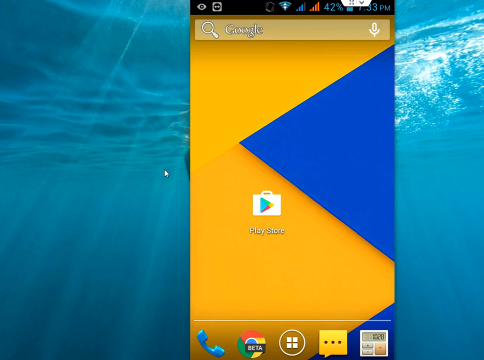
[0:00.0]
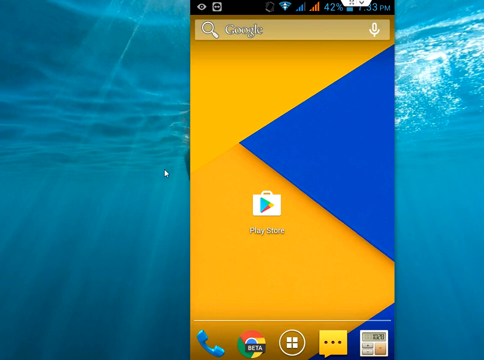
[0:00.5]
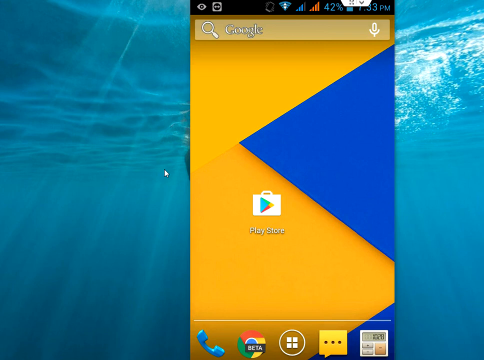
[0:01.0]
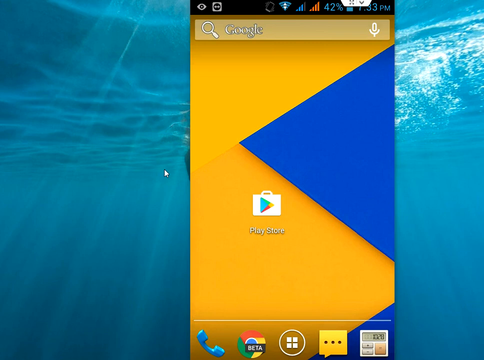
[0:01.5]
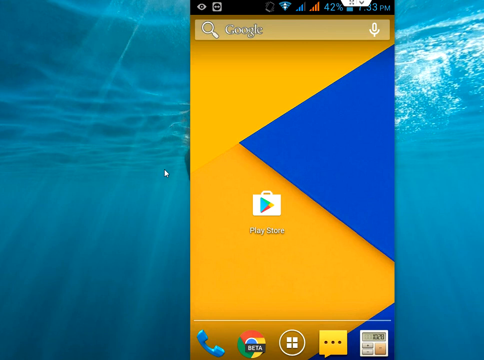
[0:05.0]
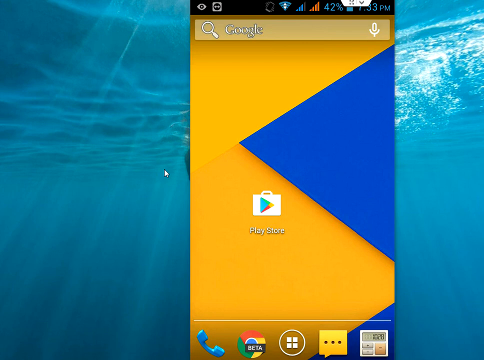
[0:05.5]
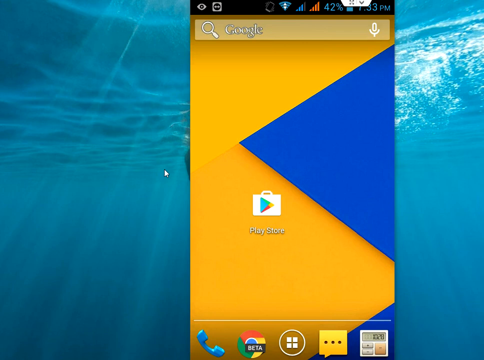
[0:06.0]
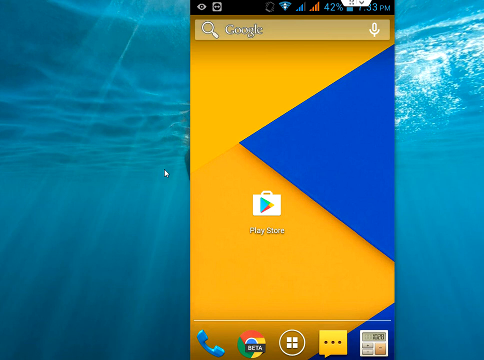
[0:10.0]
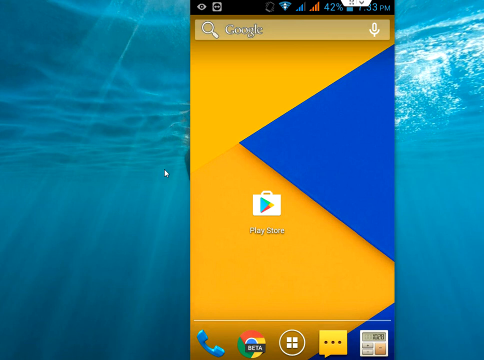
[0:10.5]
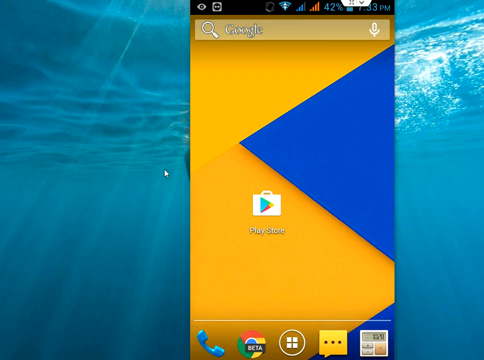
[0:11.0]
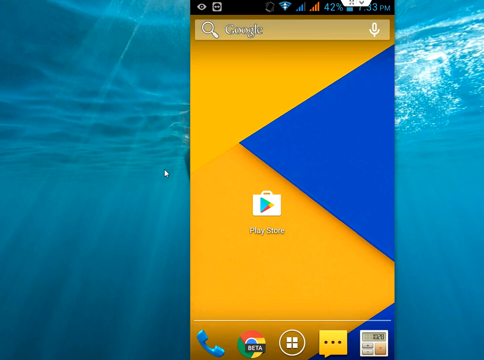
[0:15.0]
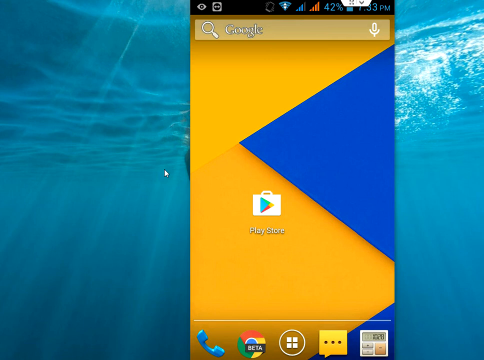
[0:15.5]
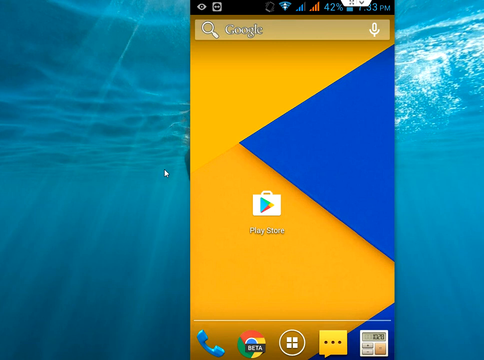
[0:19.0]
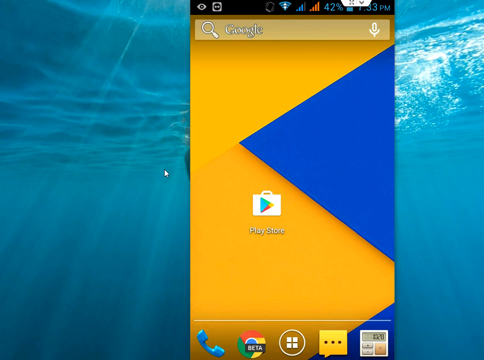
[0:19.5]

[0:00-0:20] The background appears to be underwater, either a pool or a swimming pool. Overlaid on it is a rectangular screen like that of an iPhone or smartphone. The screen has rectangular patterns along with yellow, blue and orange triangles. Almost at the center of the smartphone screen is a briefcase kind of icon, and below it the text reads "Play Store", with a symbol recognizable as the Google Play Store's. The video is very static, with no motion; only the smartphone display is visible. Along the top of the display is a series of status information, including Wi-Fi connection, internet connection, battery life and the current time, plus some other unidentified symbols. Below the status icons is a rectangular text box for Google Search, with a microphone icon in the box.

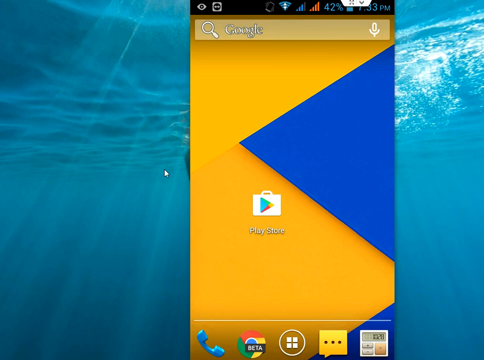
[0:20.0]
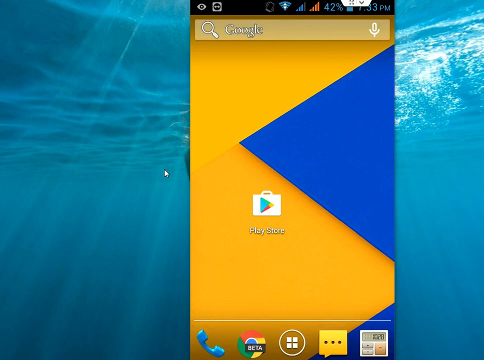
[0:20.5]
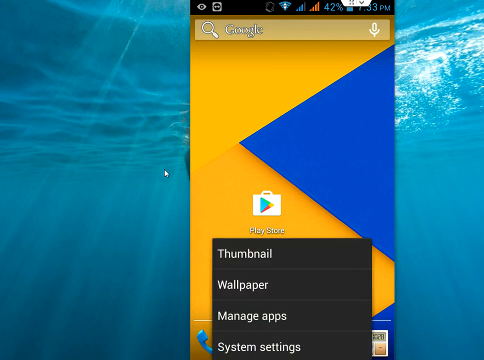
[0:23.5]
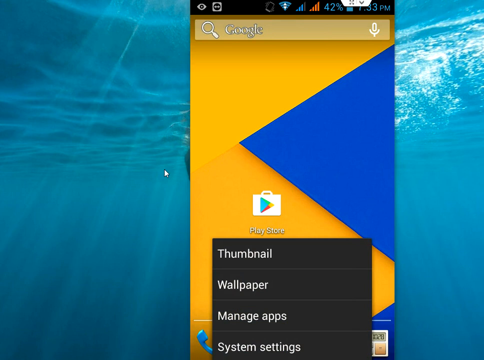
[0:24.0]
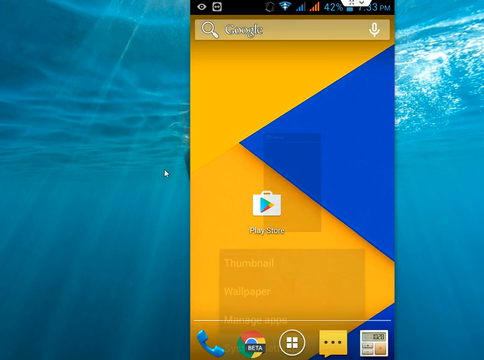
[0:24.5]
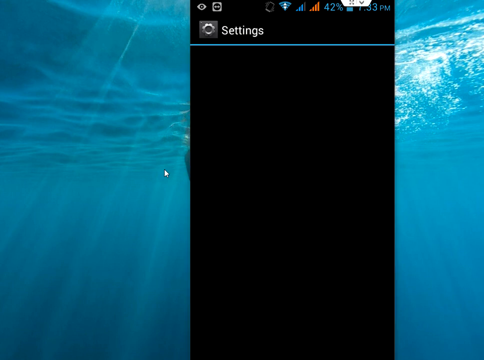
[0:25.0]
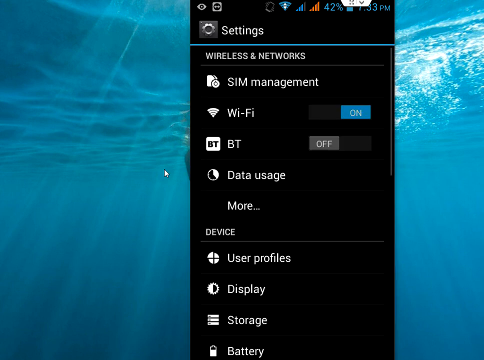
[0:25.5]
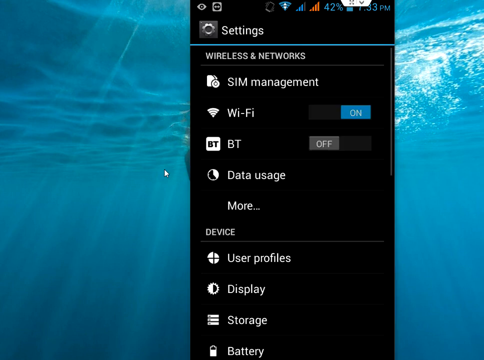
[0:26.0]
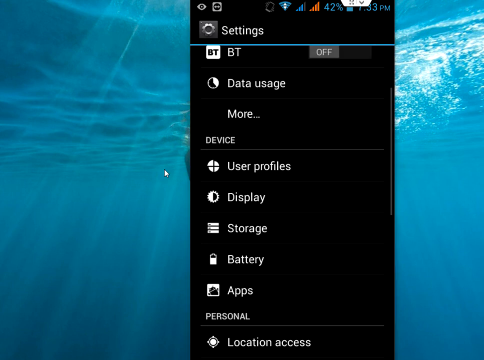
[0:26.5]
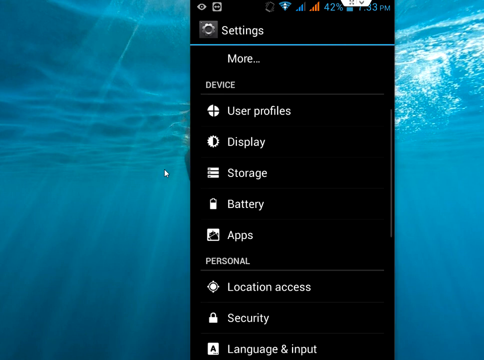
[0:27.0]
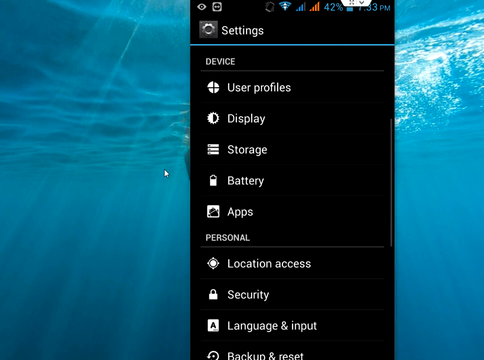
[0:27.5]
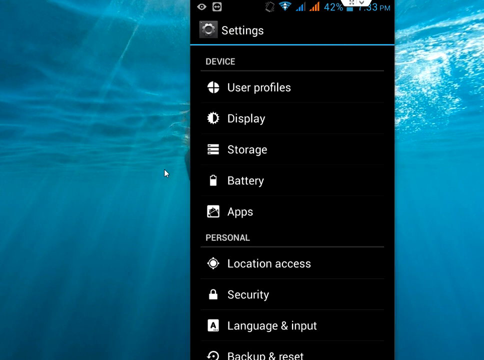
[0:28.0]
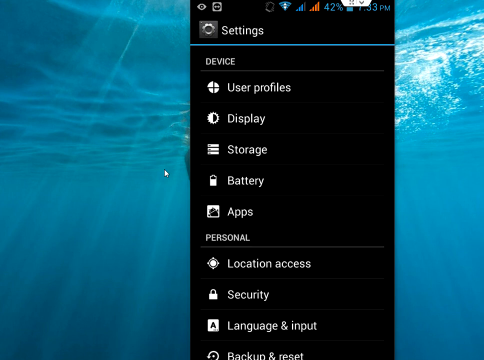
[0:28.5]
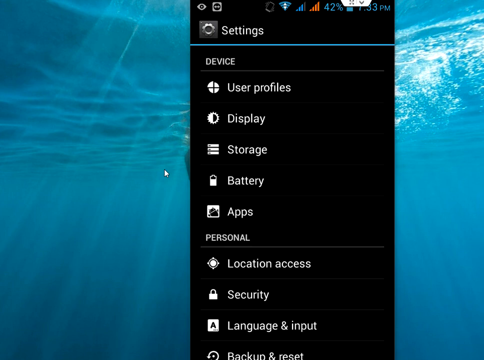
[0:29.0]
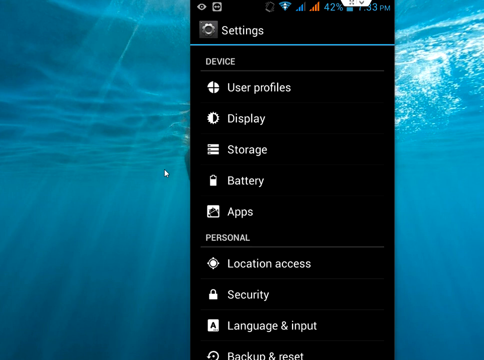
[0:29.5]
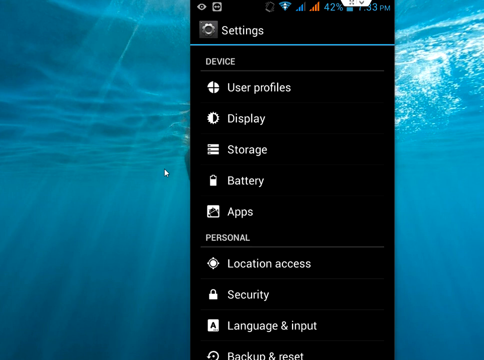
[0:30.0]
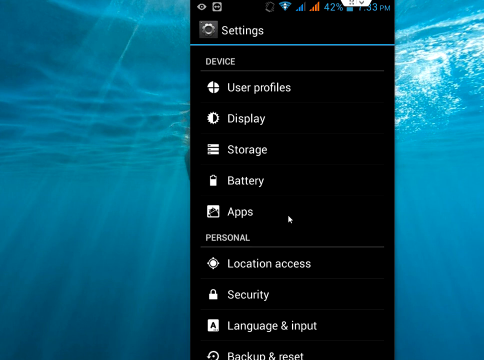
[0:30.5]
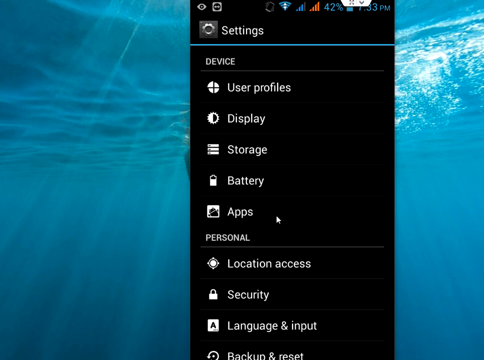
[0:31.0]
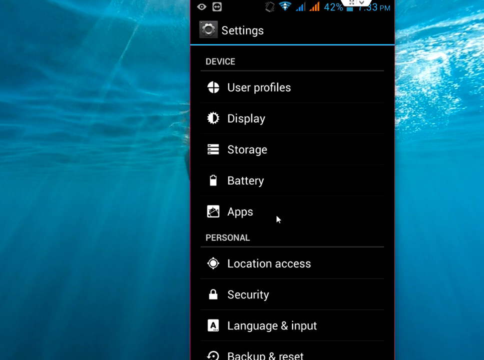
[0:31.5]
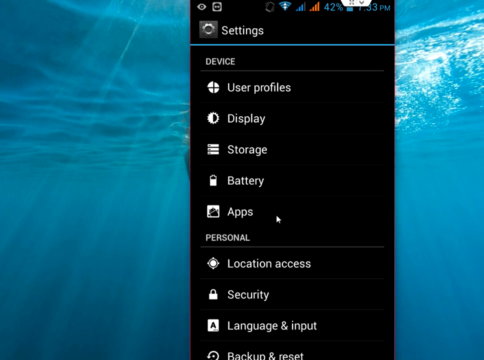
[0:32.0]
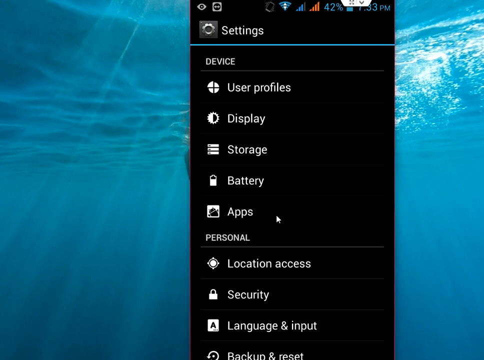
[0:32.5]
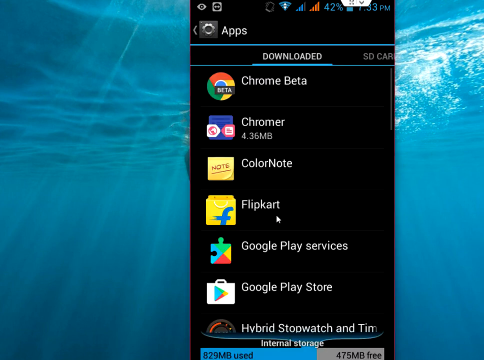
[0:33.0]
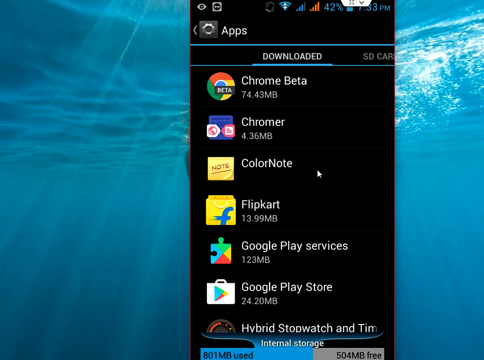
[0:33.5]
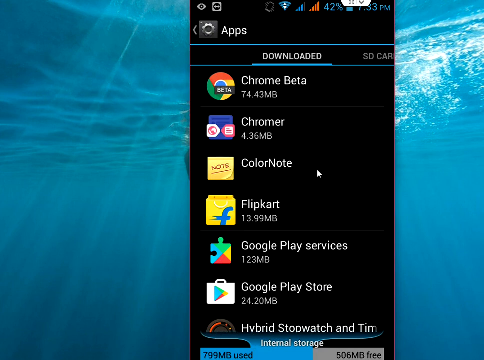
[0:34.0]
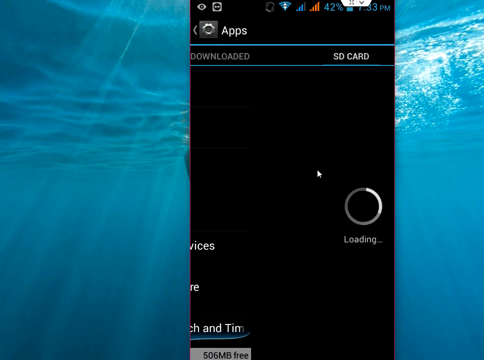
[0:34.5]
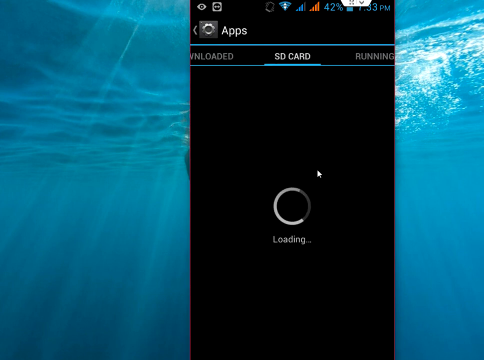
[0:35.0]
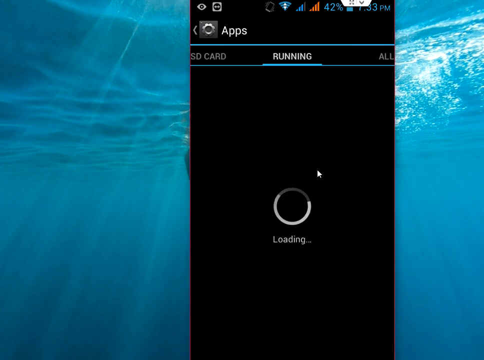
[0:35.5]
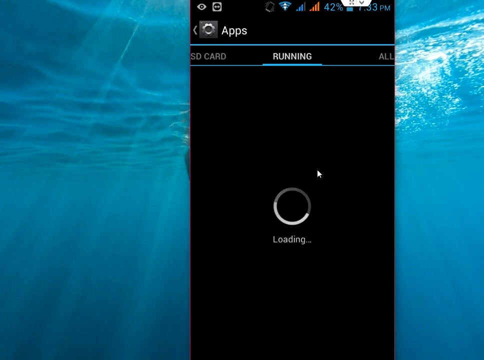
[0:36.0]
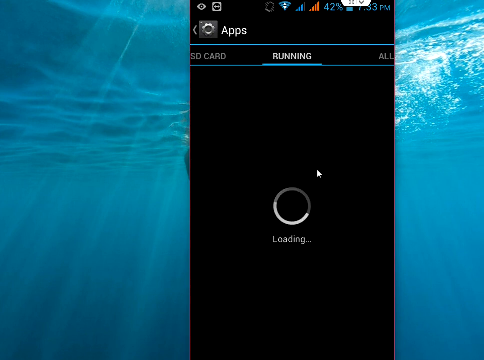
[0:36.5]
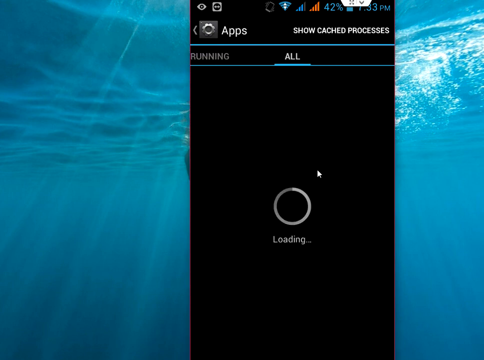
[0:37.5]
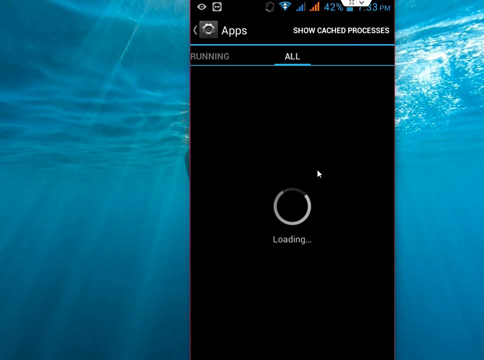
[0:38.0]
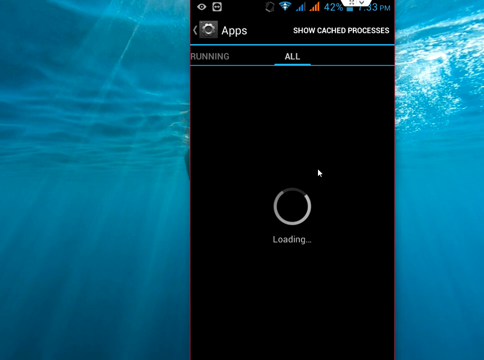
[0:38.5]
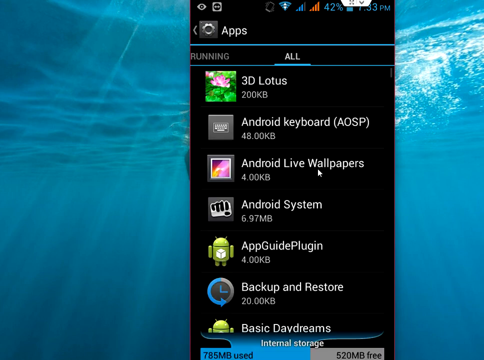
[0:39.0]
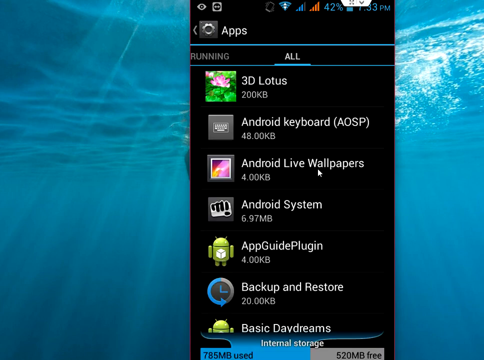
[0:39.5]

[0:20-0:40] The static smartphone screen is shown. Five icons line the bottom: at the far left a blue phone icon, second a Google symbol, third what looks like a Windows symbol, fourth three dots on a yellow rectangle, and fifth a calculator icon. The user opens a drop-down or drop-up menu containing thumbnail, wallpaper and manage apps options, picks one, and goes to system settings. Using a cursor, the user scrolls down to device and apps, clicks on apps, and reaches a downloaded apps screen listing a variety of apps already downloaded, including Chrome beta, Google Play services and Google Play store. The user then scrolls to the right, pushing the screen to the left, through the SD card section, then the running section, to the all section. Once all the apps load, they are shown, including 3D, Lotus and Android keyboard.